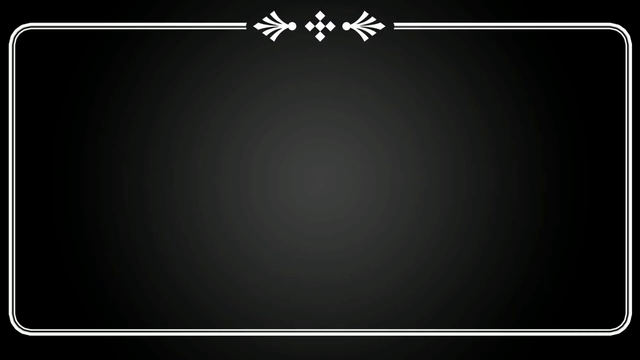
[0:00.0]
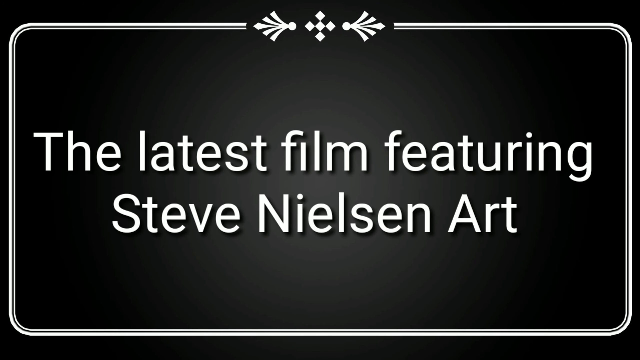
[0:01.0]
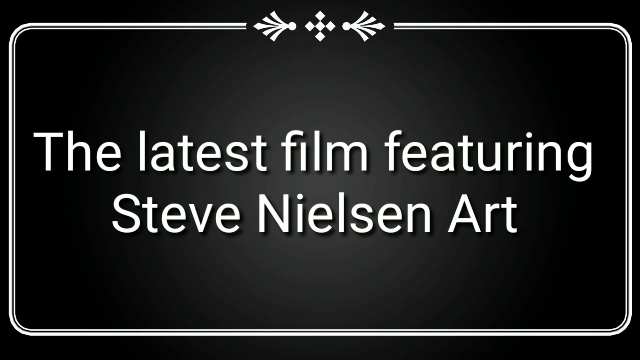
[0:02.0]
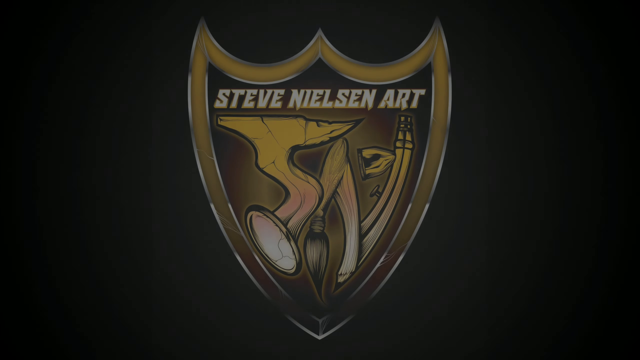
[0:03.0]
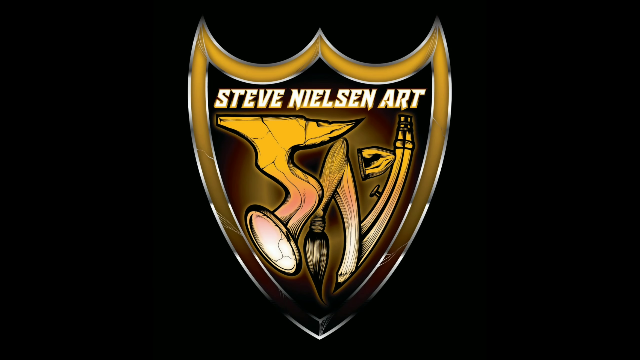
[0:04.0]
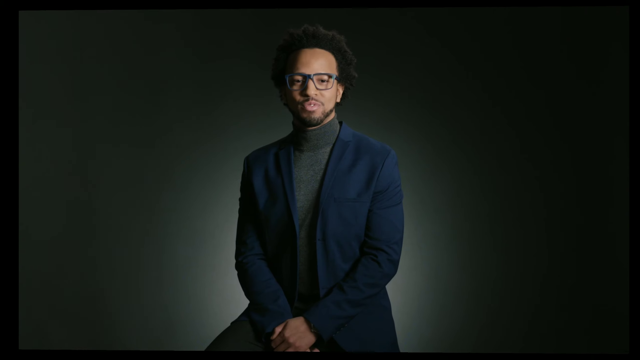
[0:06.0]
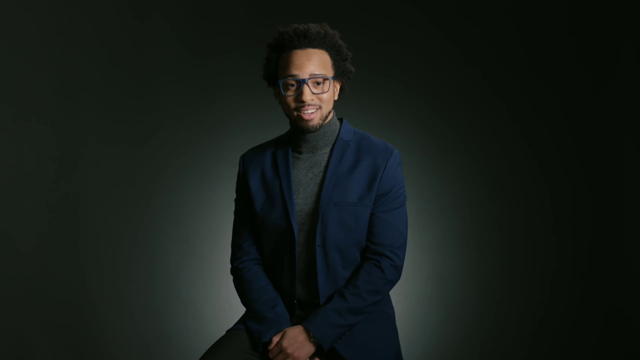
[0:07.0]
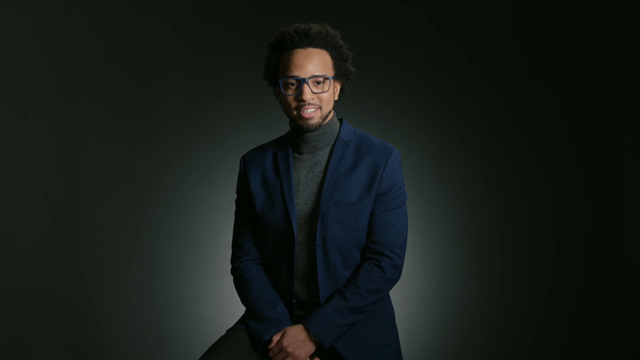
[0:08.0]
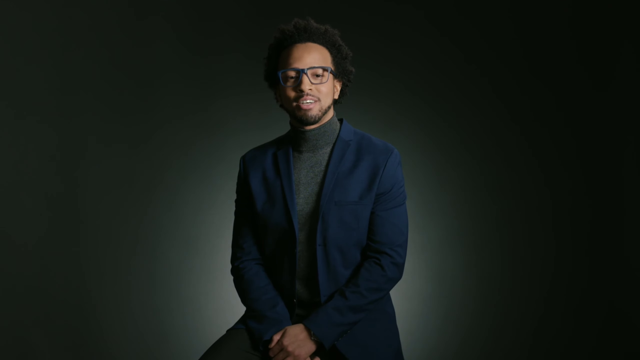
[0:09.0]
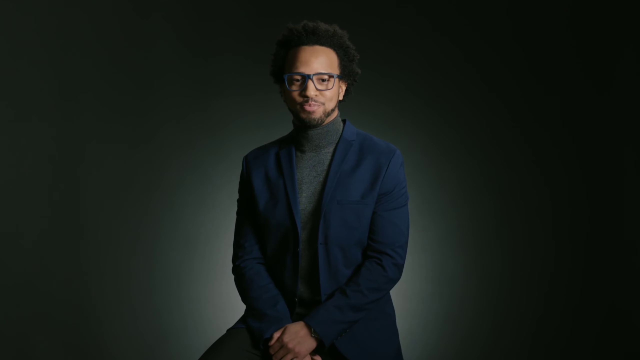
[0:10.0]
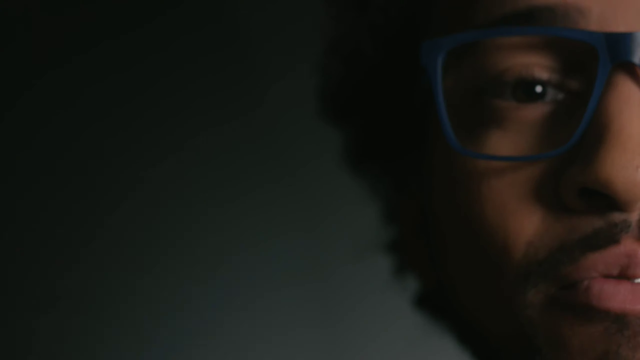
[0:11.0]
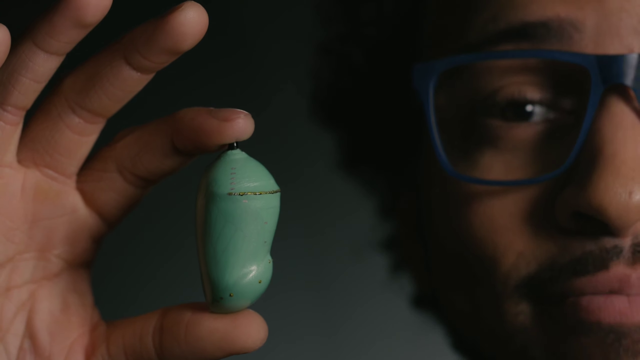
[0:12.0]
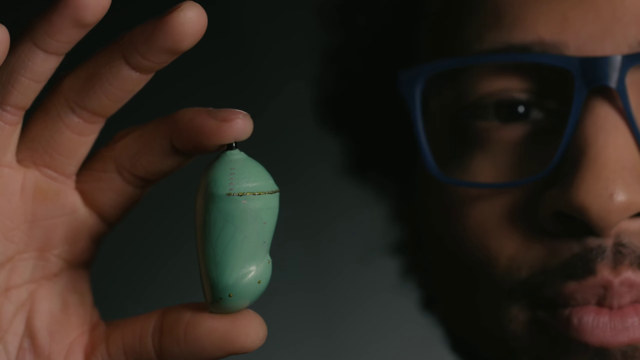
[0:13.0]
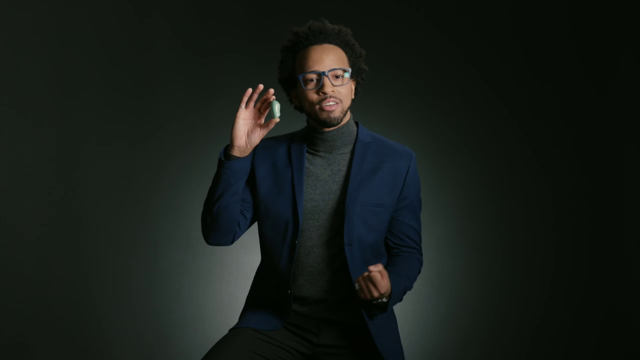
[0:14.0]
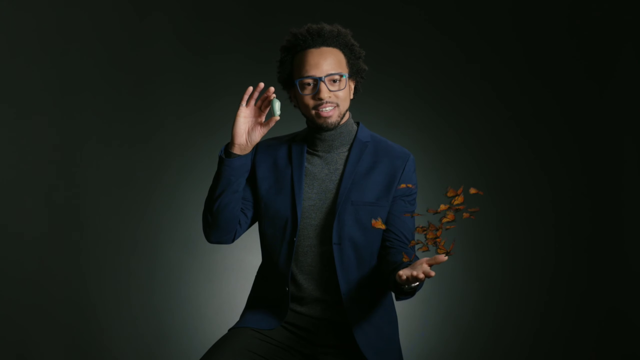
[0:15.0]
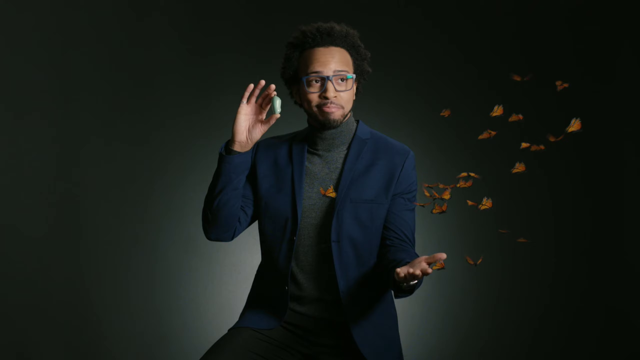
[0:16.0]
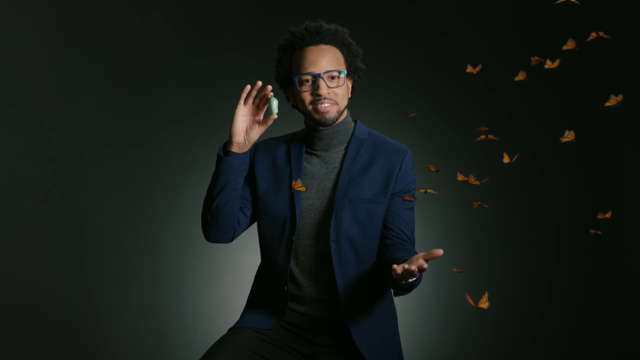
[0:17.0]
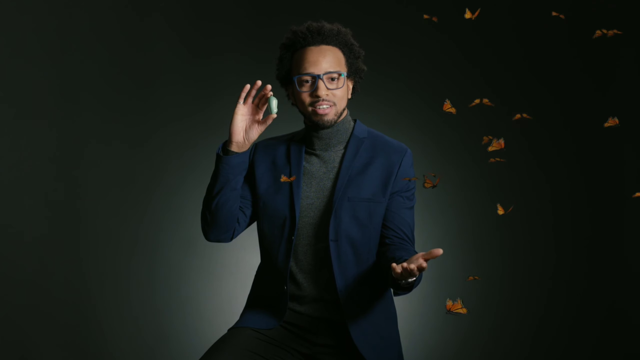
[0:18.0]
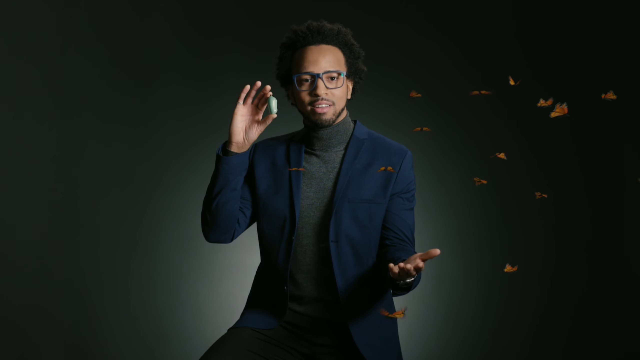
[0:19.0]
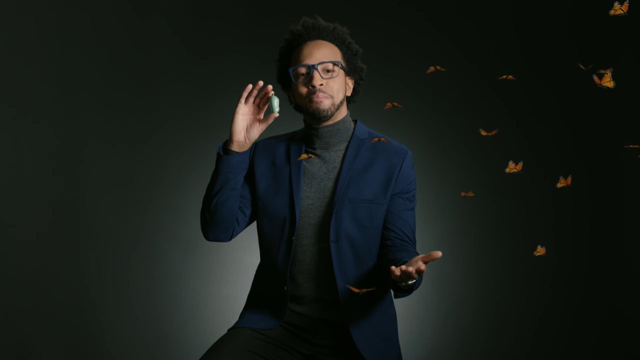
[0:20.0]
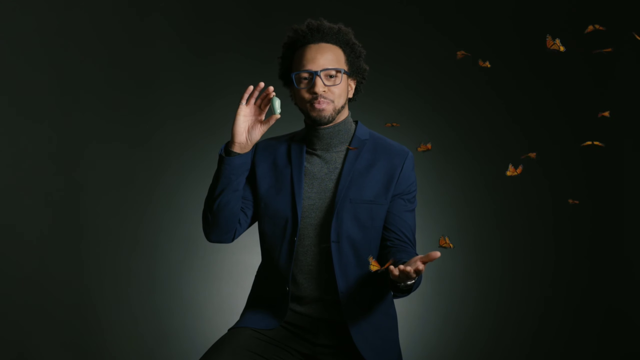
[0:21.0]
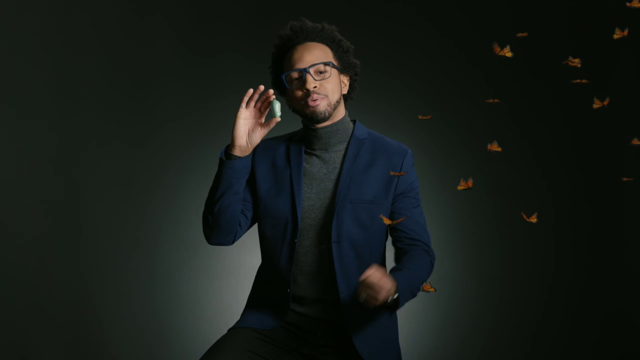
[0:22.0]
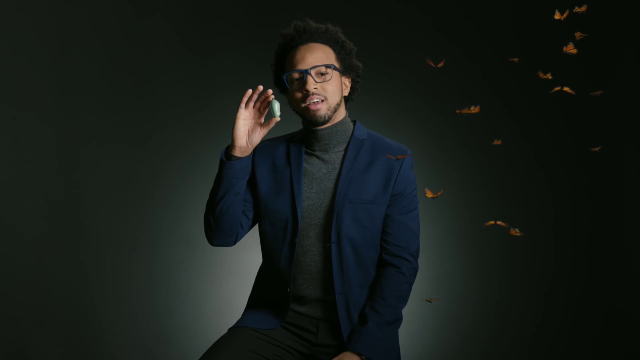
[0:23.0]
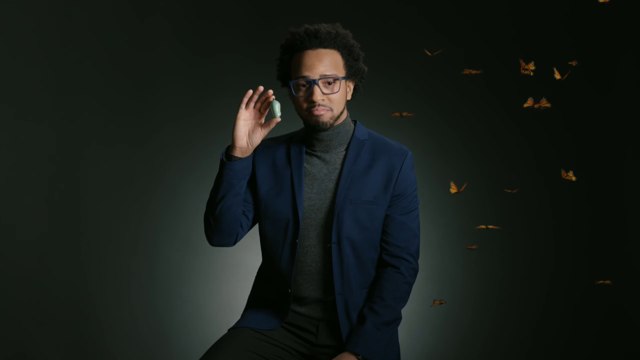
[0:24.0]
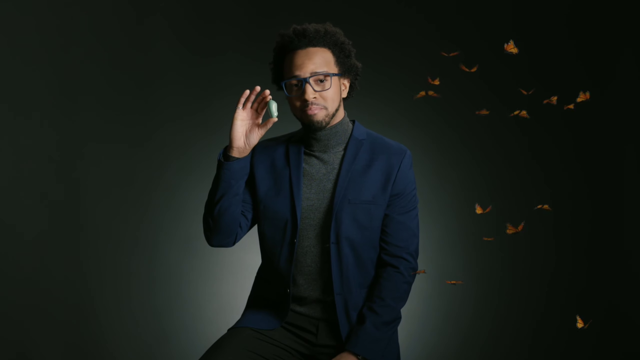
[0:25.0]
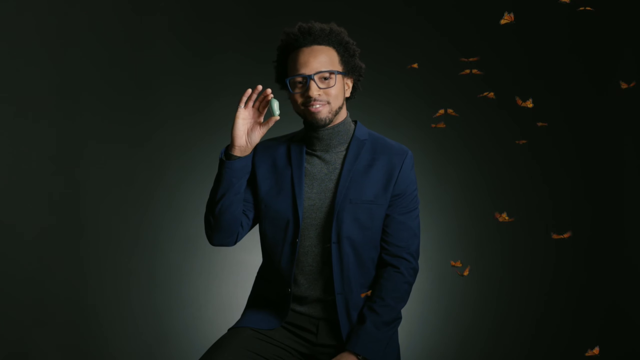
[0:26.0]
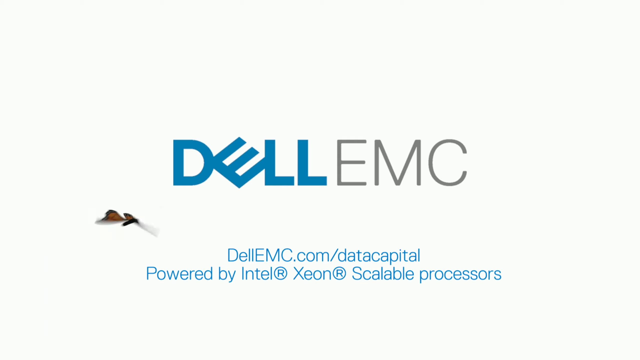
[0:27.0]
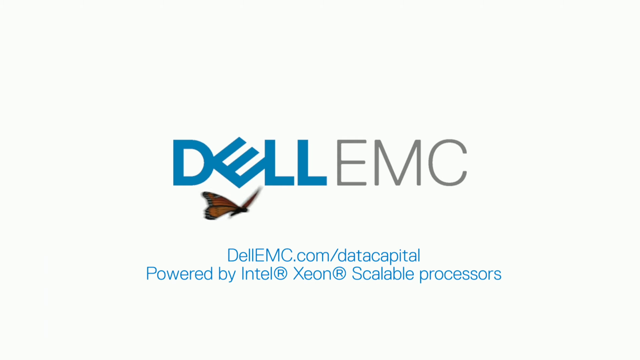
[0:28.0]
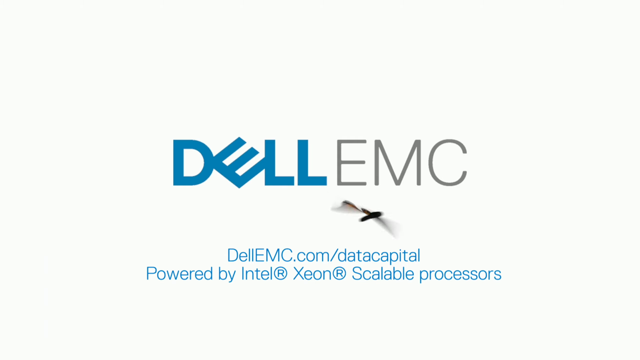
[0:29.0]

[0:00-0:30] The video begins with a gray-black background with a white border around the outside. Text in the center reads "latest film featuring Steve Nielsen art." It stays on screen for about two seconds, then the border and the white text fade away. Another screen appears with a black outside and a yellow shield in the center; the shield says "Steven Nielsen art" and appears to contain art tools such as a paintbrush, a pencil and possibly an airbrush. The shield zooms out, turns a couple of times and fades away in the middle. The screen is black for a moment, then an image of a man who appears to be sitting pops up and zooms in. He appears to be a Black man, wearing a blue jacket over a gray turtleneck, with curly hair on top and glasses. The image zooms in and stops, and he begins to speak. He seems to speak with confidence and appears to be in a jovial mood, nodding his head, and then he looks down at his hands.